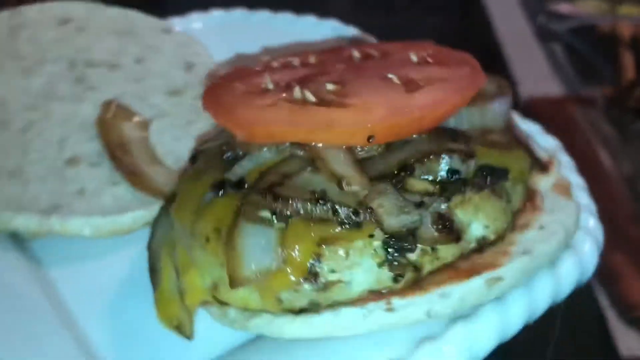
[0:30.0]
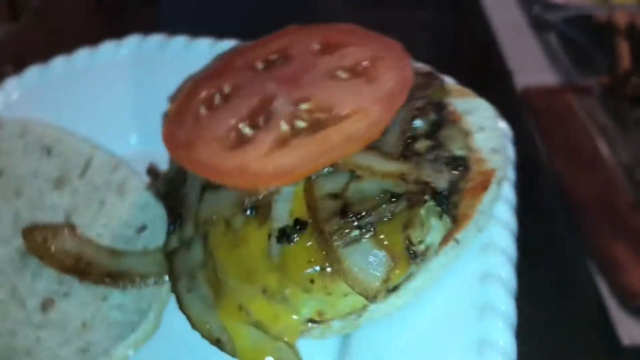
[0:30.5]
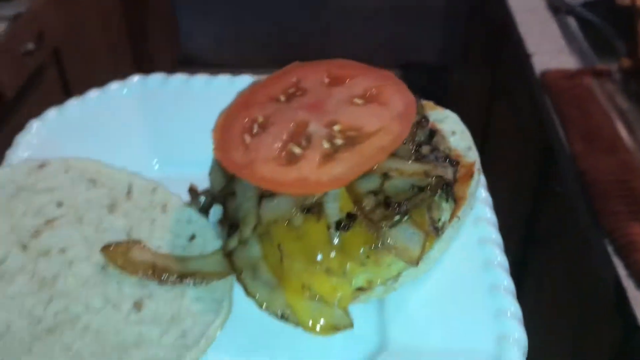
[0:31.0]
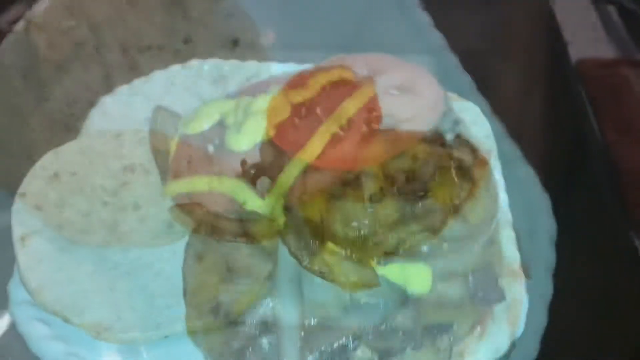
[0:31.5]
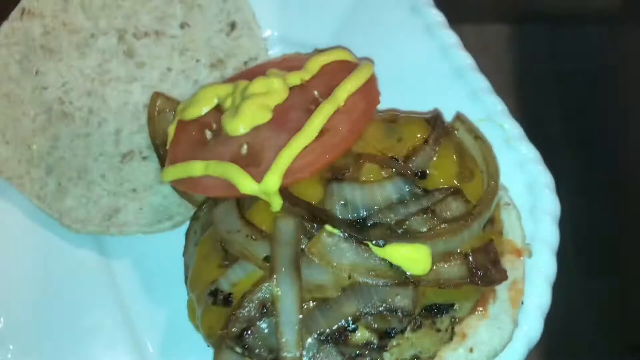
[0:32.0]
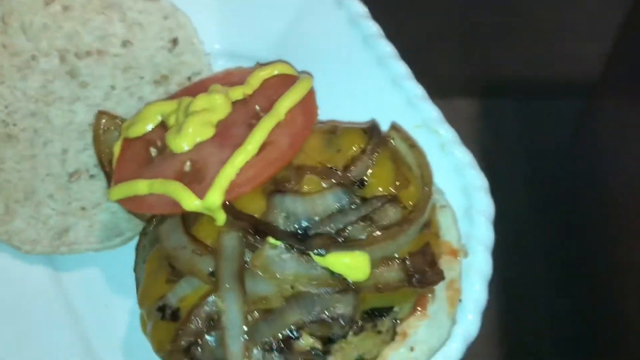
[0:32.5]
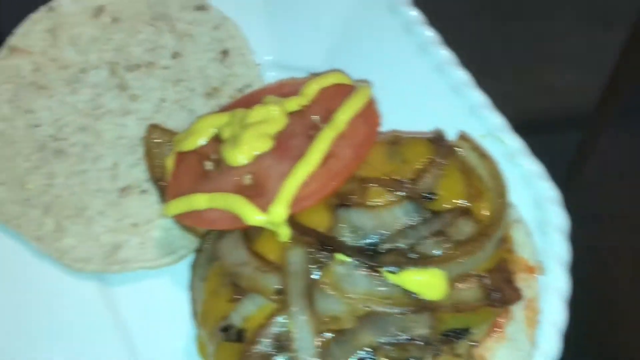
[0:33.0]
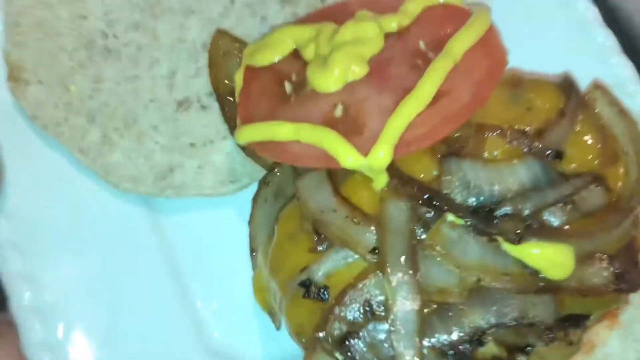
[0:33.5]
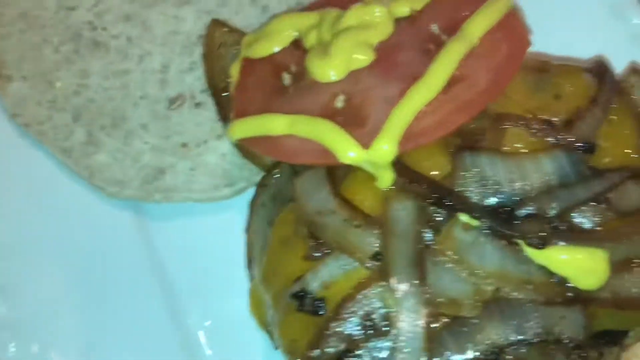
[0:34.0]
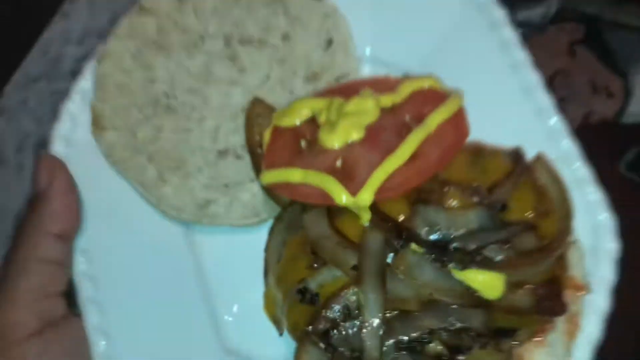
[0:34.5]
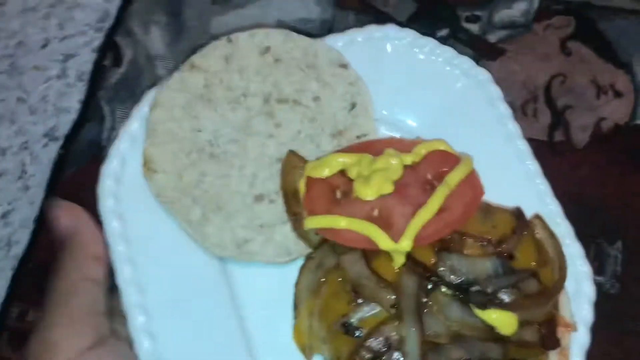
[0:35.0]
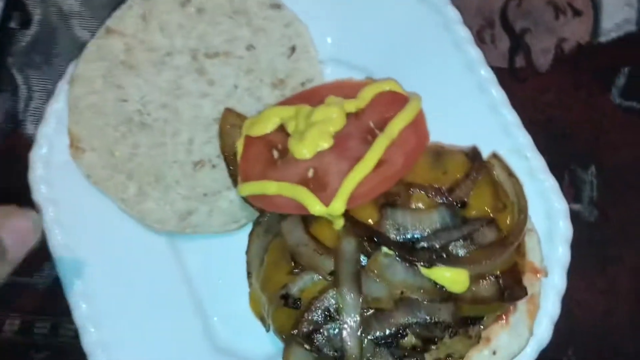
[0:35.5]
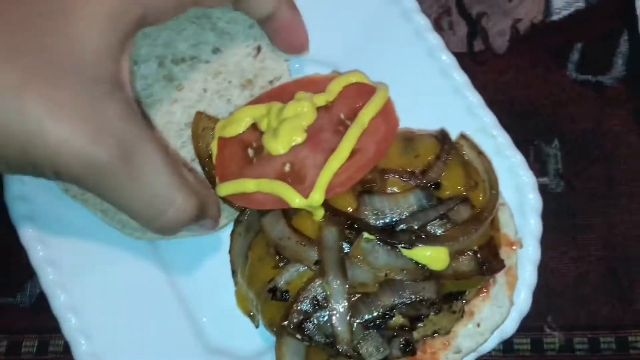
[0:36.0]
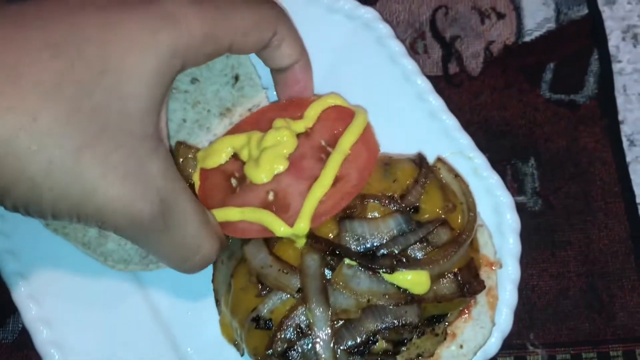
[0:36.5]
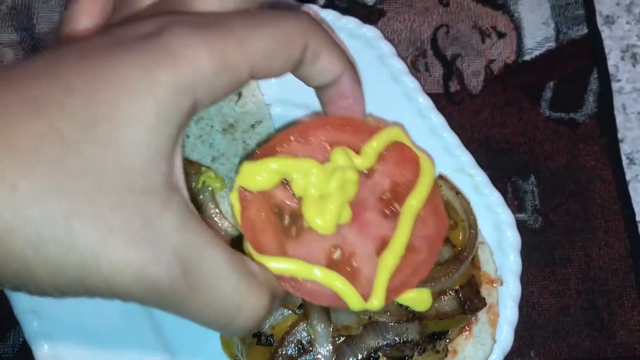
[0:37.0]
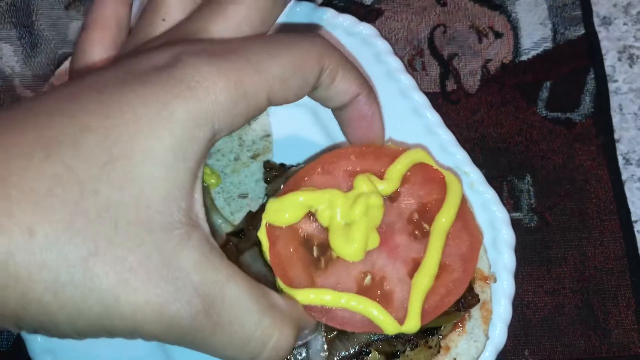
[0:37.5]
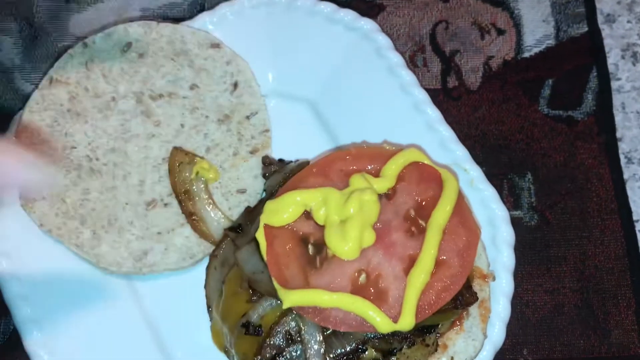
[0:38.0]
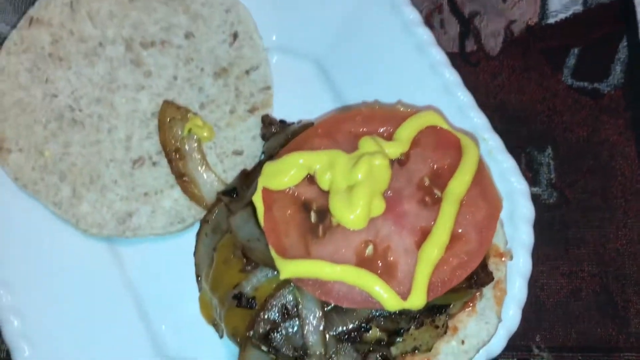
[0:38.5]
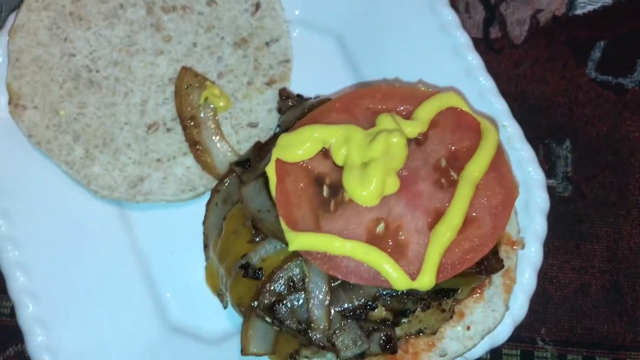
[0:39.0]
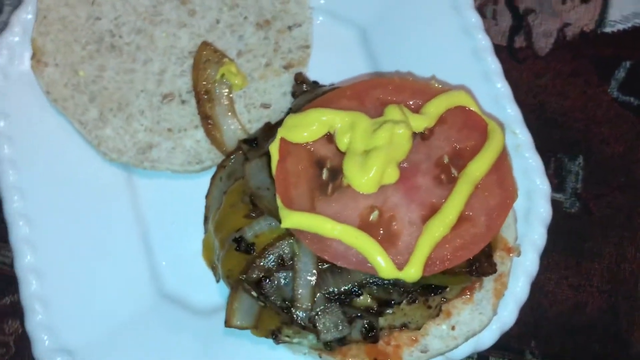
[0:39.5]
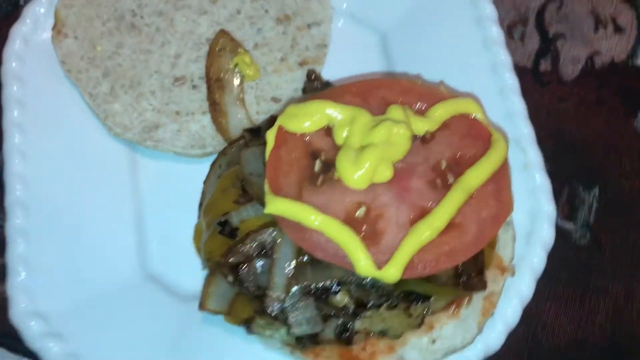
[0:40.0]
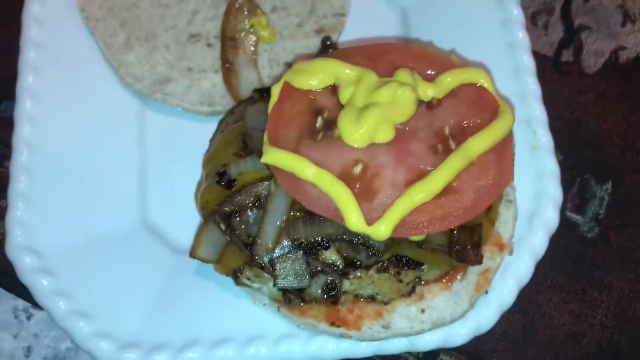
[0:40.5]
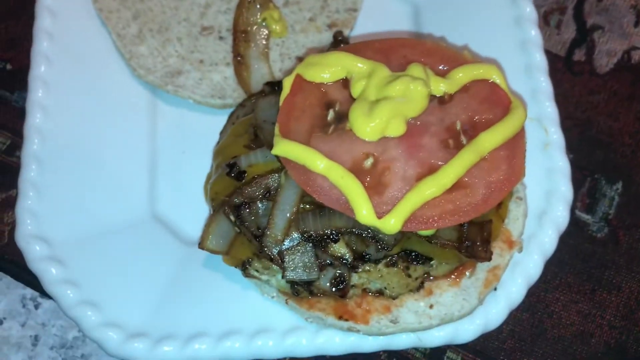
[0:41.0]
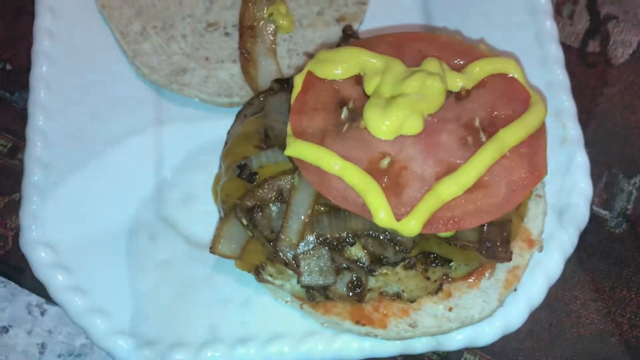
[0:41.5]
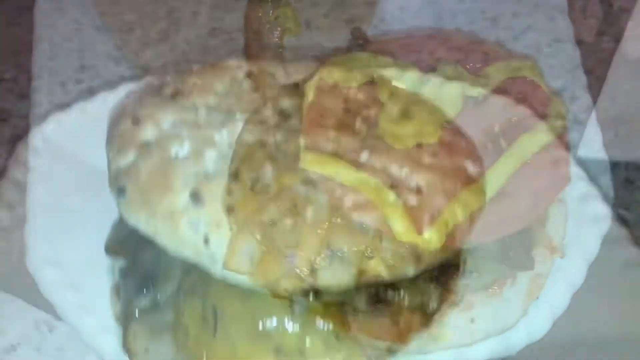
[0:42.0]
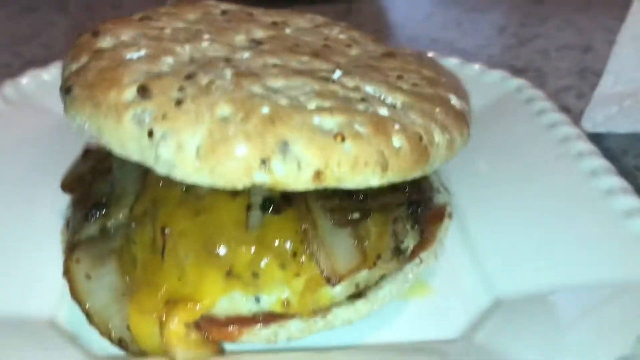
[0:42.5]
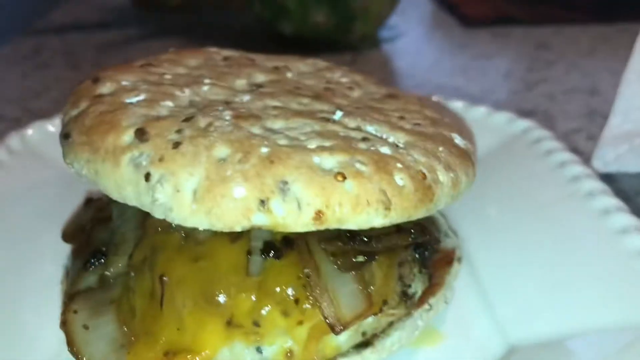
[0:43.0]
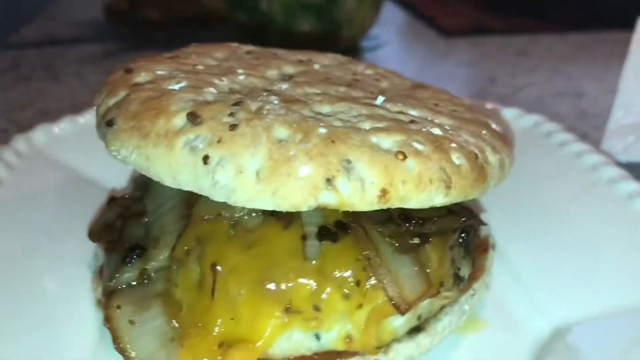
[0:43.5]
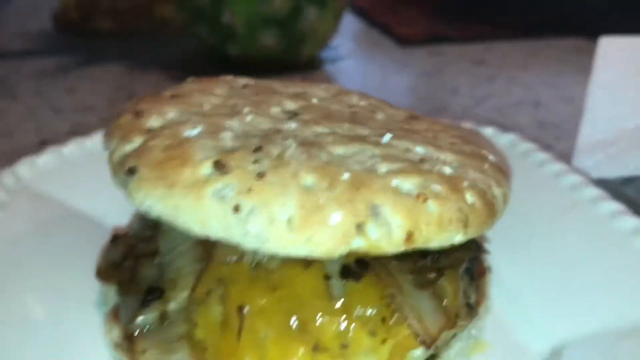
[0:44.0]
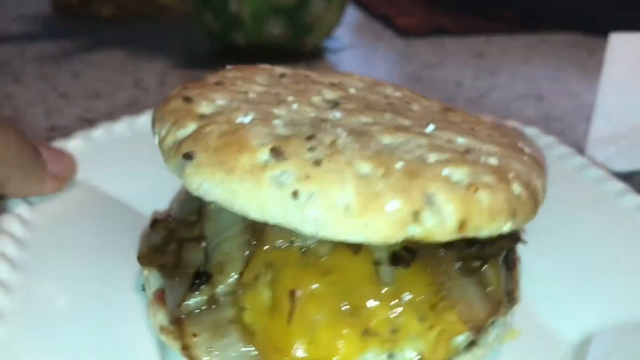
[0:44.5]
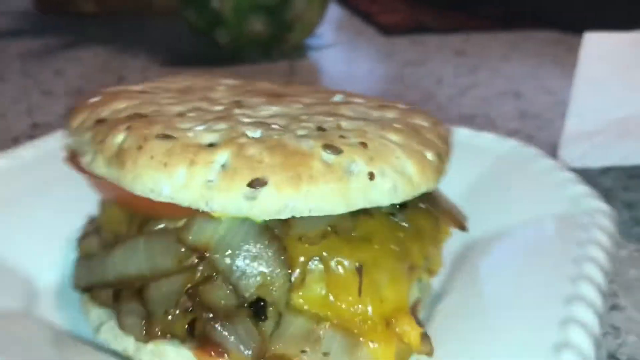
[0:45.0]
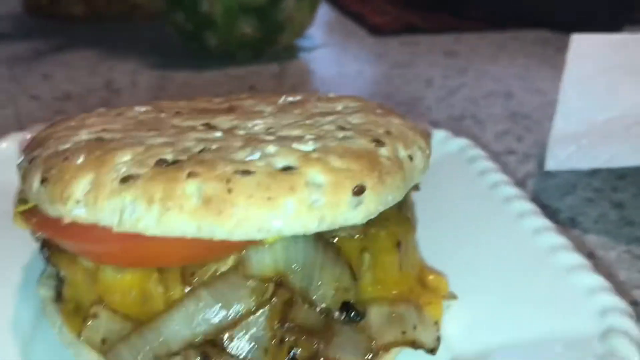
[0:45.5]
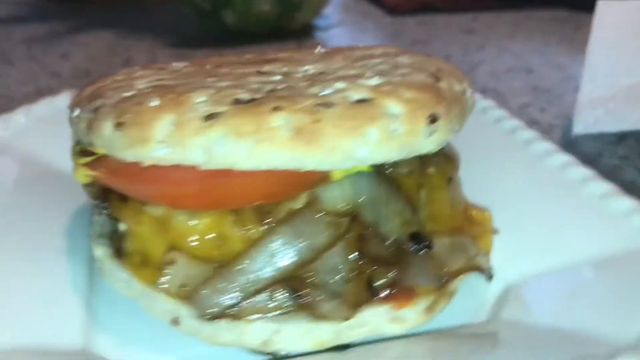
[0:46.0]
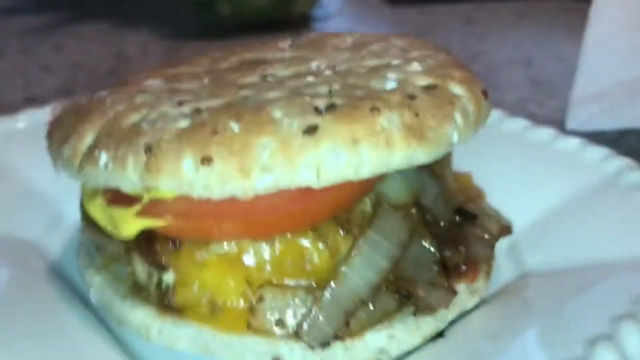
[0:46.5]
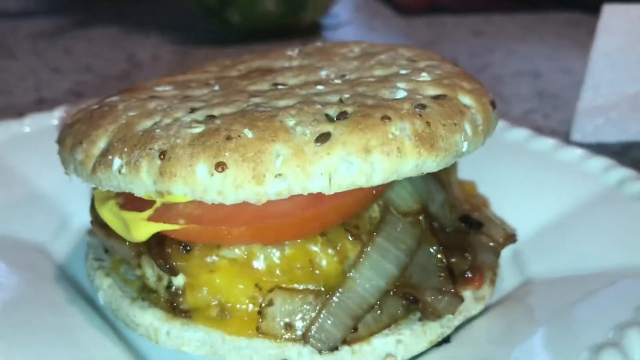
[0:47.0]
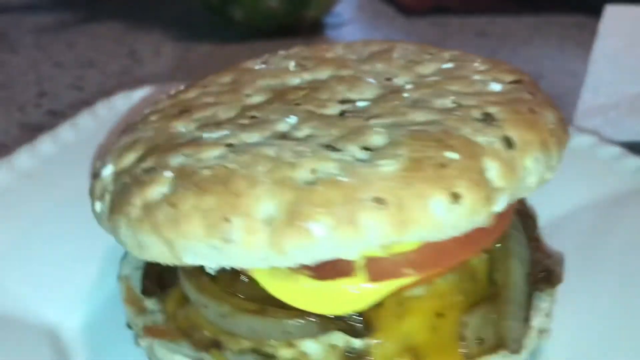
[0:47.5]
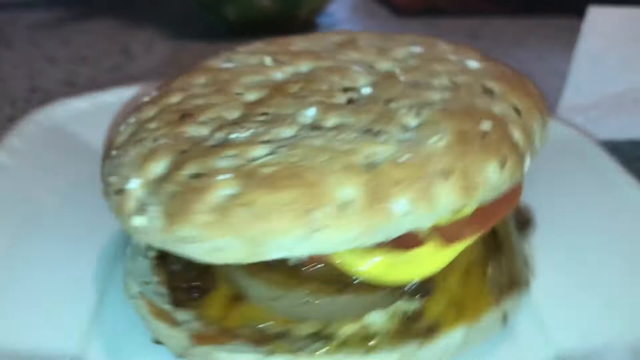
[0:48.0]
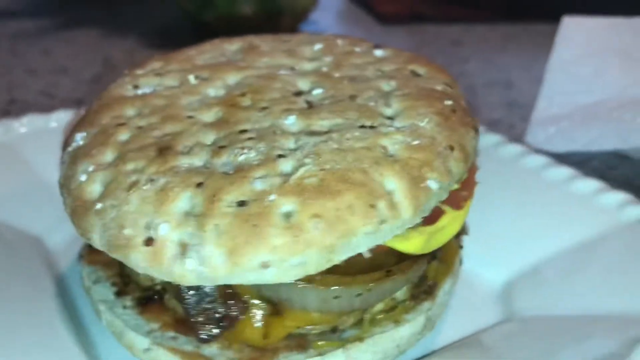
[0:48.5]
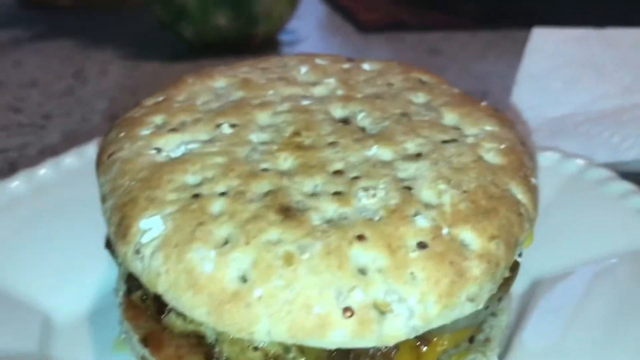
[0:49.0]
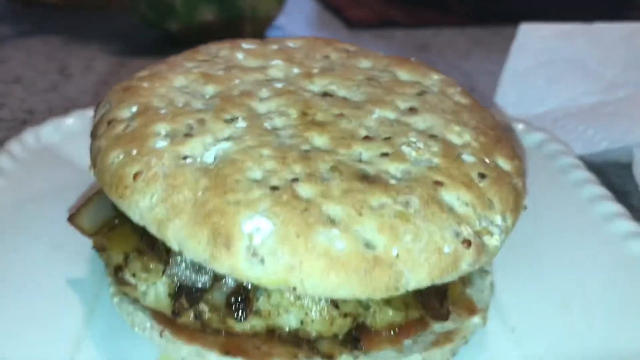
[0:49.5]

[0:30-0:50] The patty with sautéed onions and cheese has a thick sliced tomato on top. The plate kind of spins around, and the scene quickly transitions to yellow mustard on the tomato, spread in the shape of a heart, with the tomato kind of tilted off to the side of the patty. The person puts the white plate down; their hand is Caucasian, and they use it to put the tomato on the grilled onion and patty. The plate is on a sort of table mat or table napkin that appears to show a cartoonish Italian chef. A transition leads to a shot where the other half of the sandwich tin is now on the burger, so it looks like a proper burger. The person kind of takes the white plate and spins it around to show all the different sides.